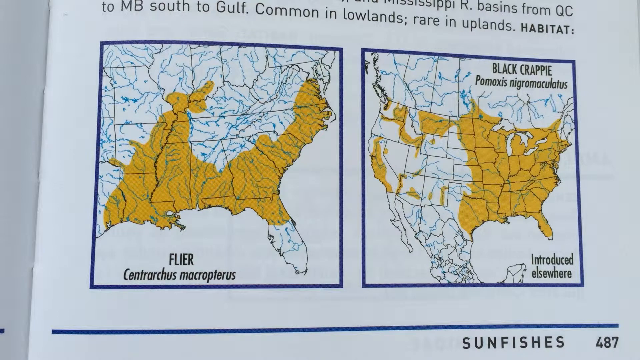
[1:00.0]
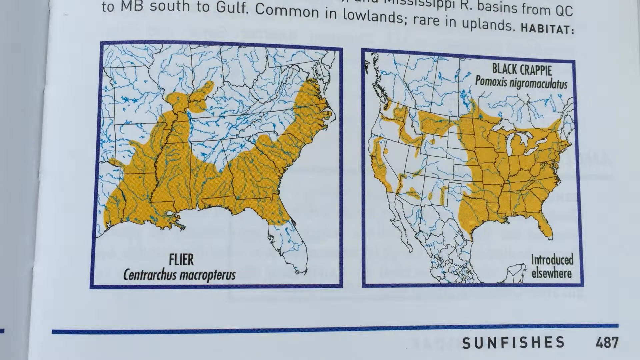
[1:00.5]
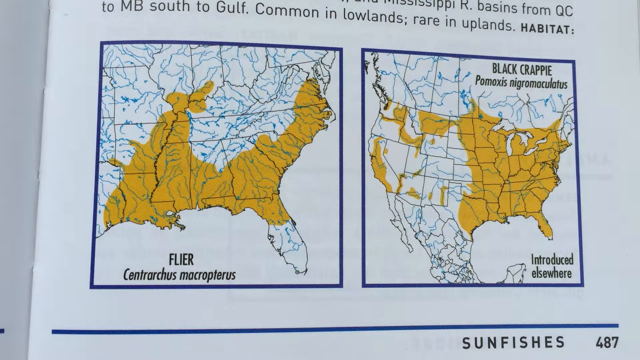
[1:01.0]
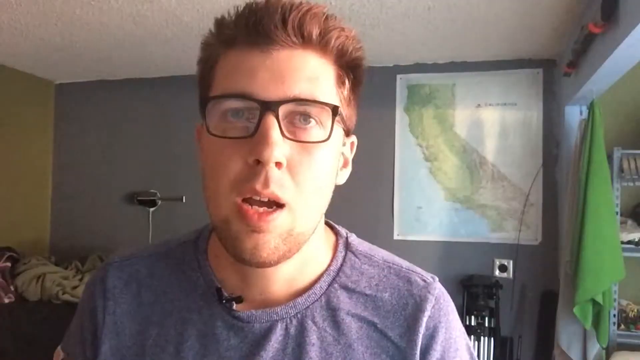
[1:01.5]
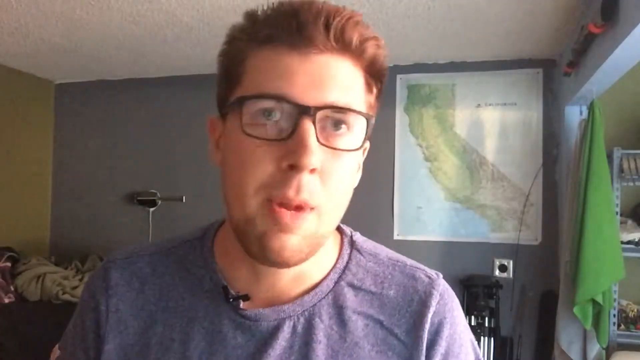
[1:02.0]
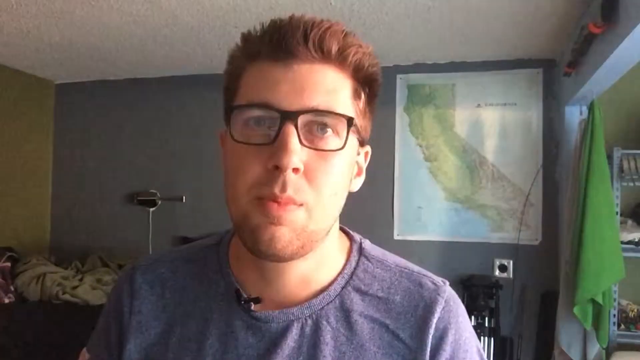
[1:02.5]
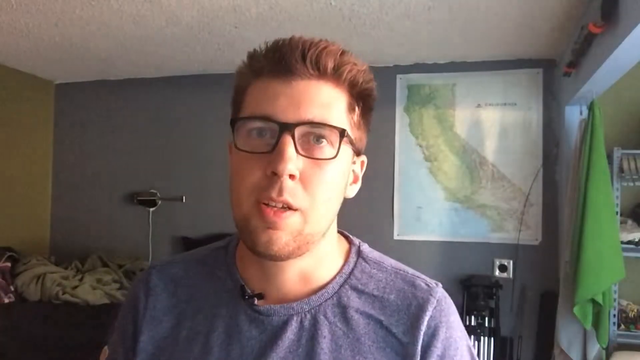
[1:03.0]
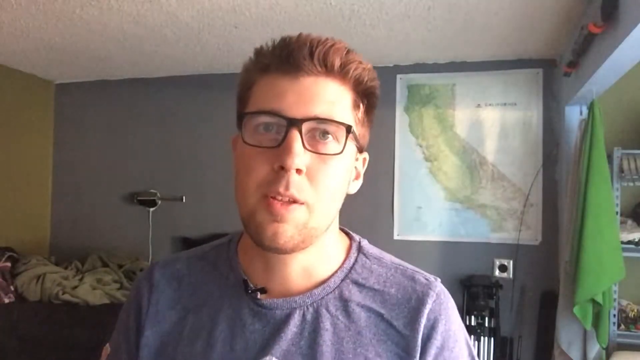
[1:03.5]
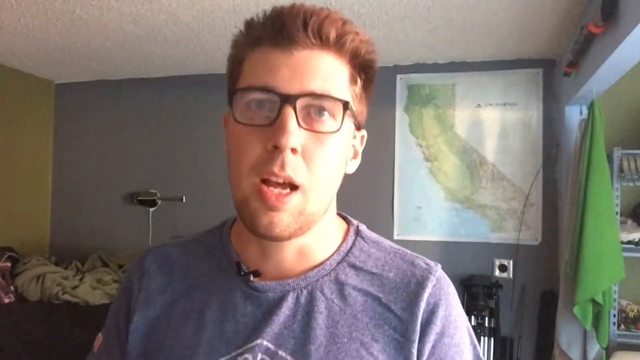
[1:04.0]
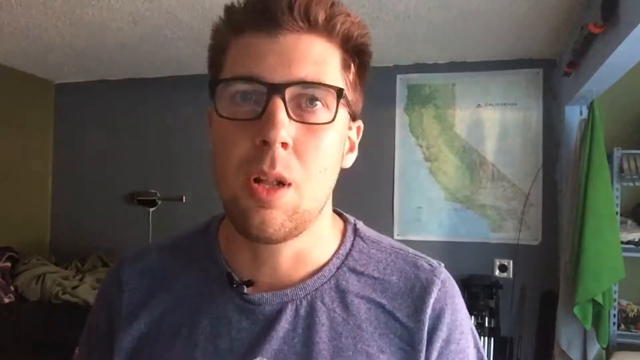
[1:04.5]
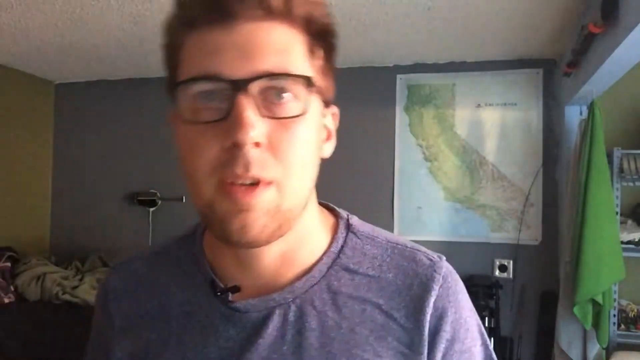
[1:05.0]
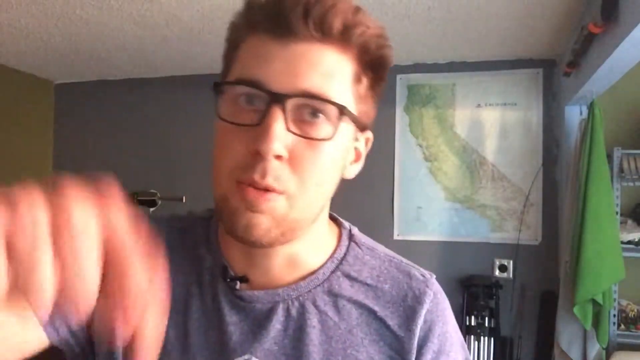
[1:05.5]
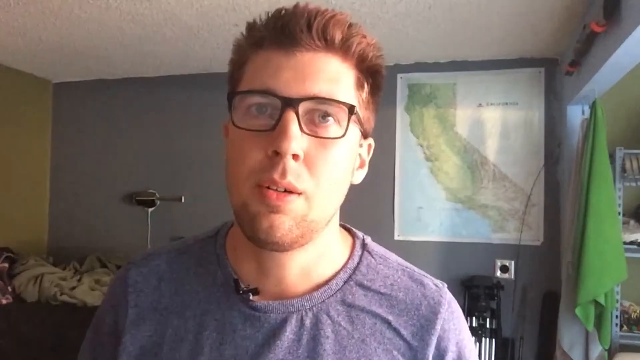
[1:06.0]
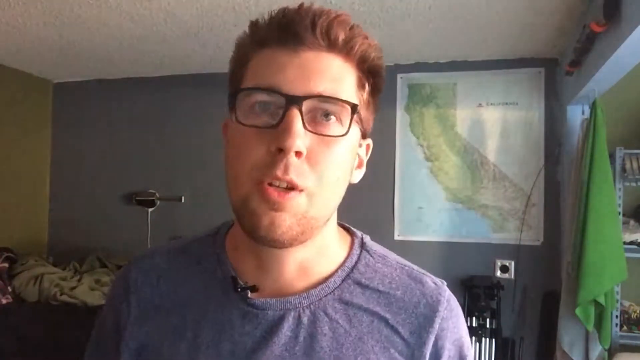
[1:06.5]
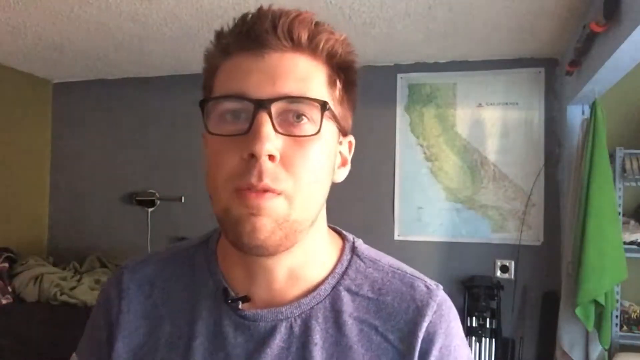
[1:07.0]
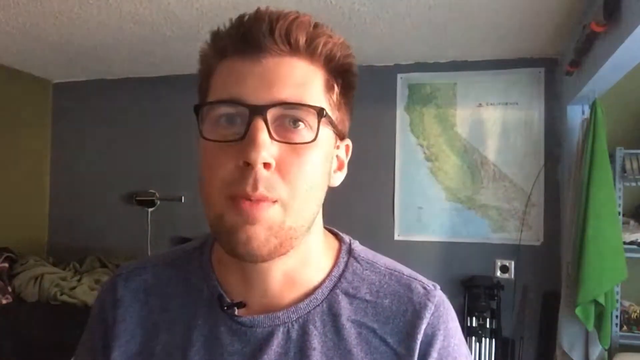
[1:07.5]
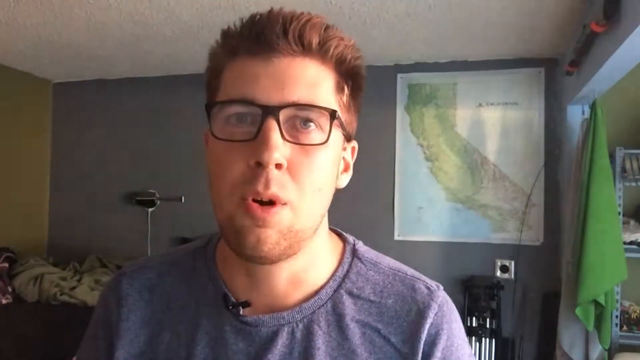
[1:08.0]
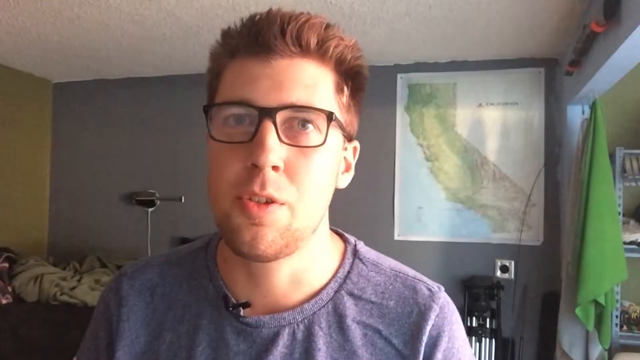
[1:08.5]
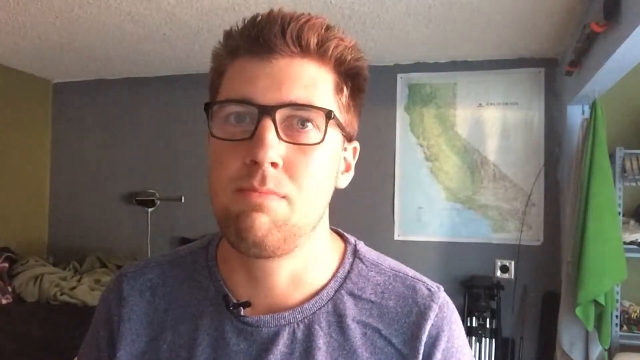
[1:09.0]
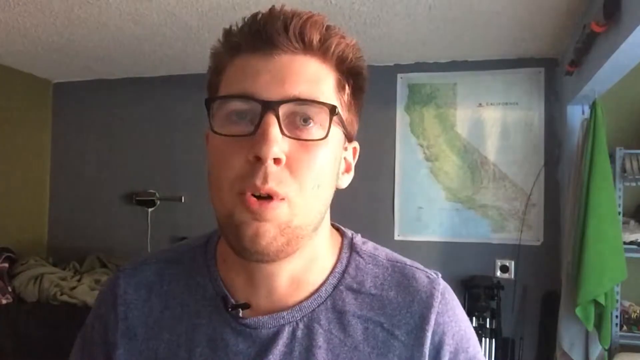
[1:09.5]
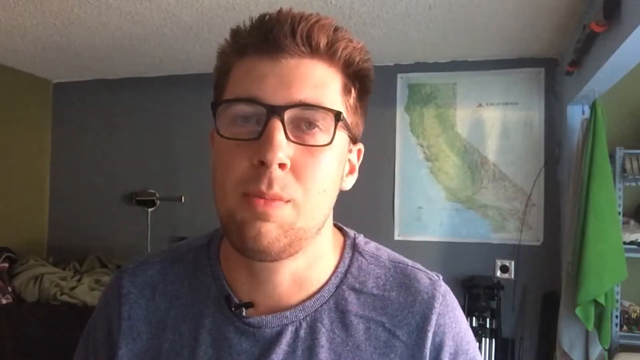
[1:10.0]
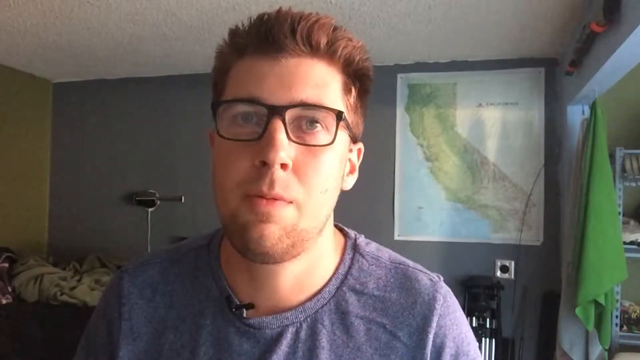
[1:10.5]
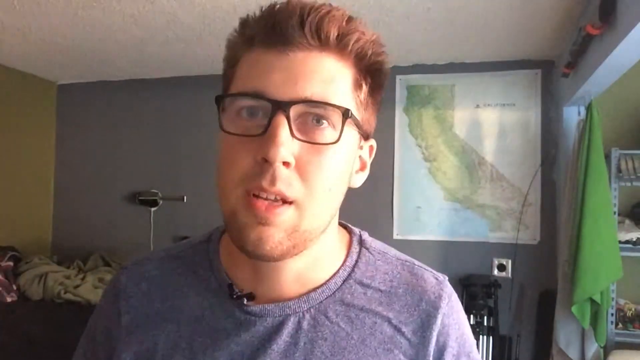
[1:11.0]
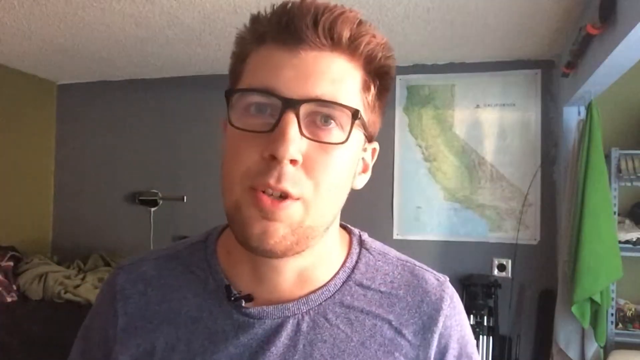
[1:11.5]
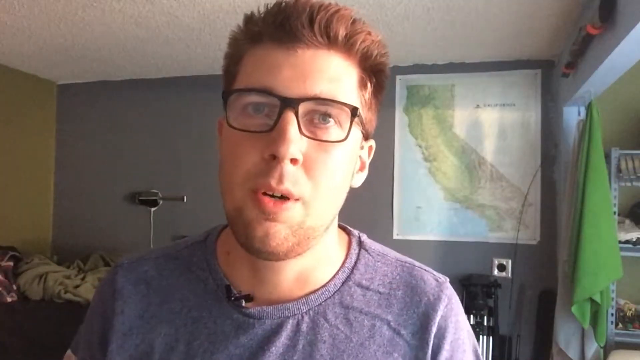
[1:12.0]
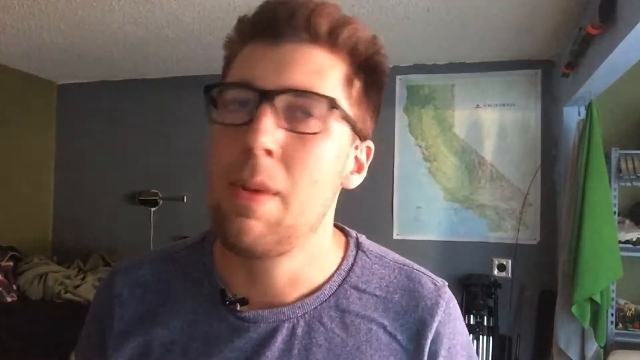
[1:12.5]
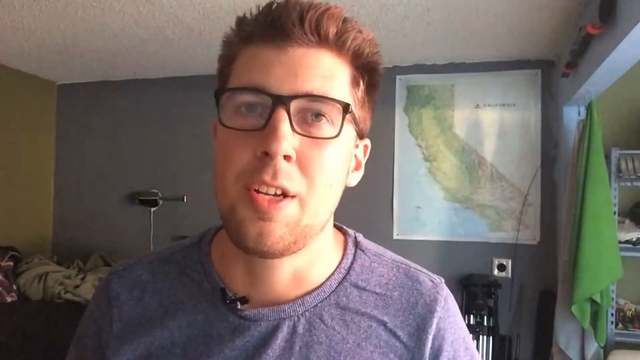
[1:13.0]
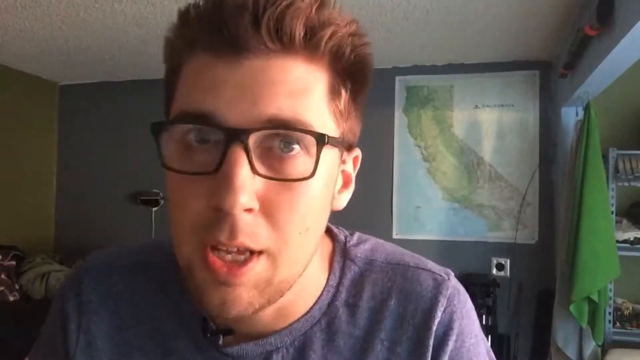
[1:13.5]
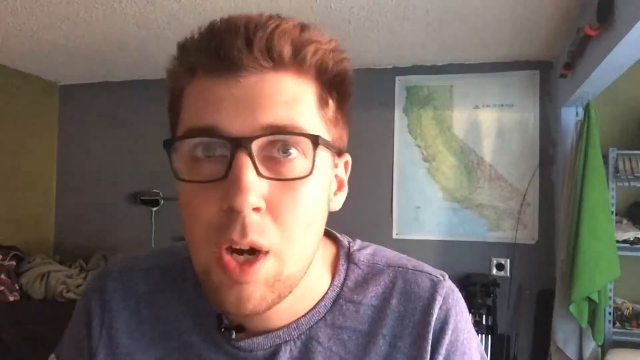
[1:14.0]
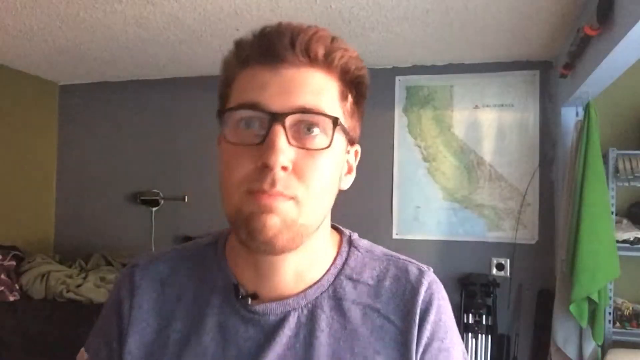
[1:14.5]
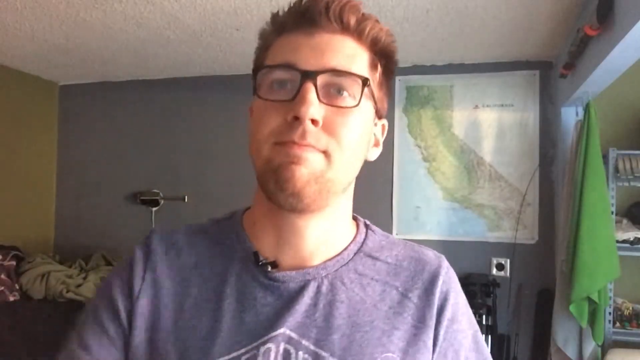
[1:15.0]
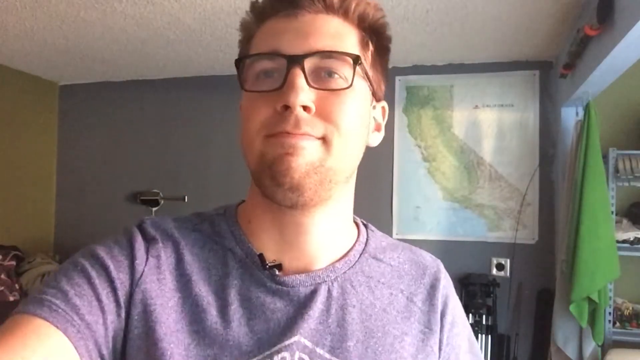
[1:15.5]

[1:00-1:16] A map shows where the flier is very common in the United States, and on the right side another shows where the black crappie is very common in the United States, with text saying the black crappie is "introduced elsewhere". The scene then changes to a young man with glasses sitting in front of a camera in what seems to be his room. Behind him is a map of the western side of the US, and a bed is visible. The walls are painted green and blue, and on the right side there are some kind of bookshelves. A camera stand is in the distance, and a gun hangs on the wall. He is explaining something, and at the end he reaches towards the camera to turn it off.